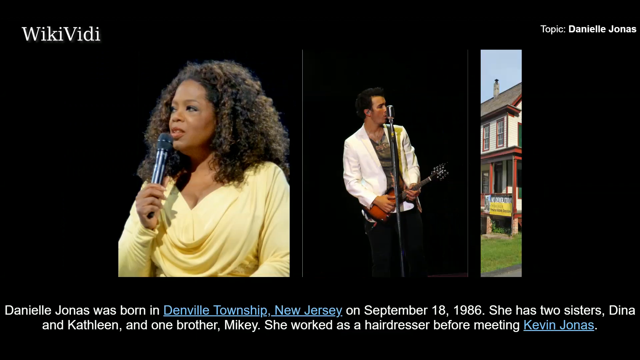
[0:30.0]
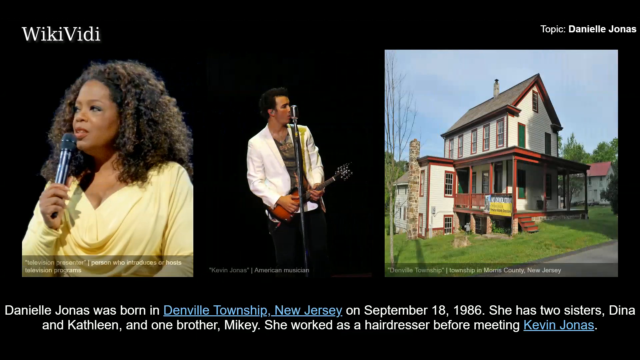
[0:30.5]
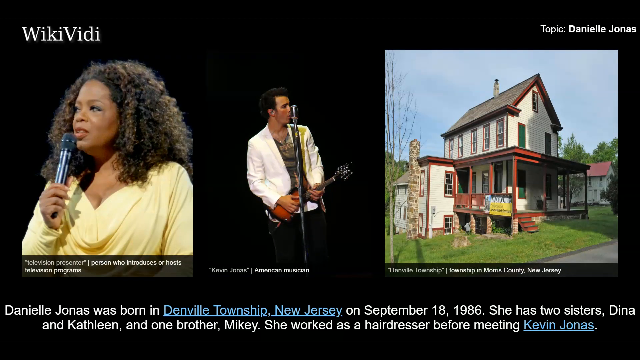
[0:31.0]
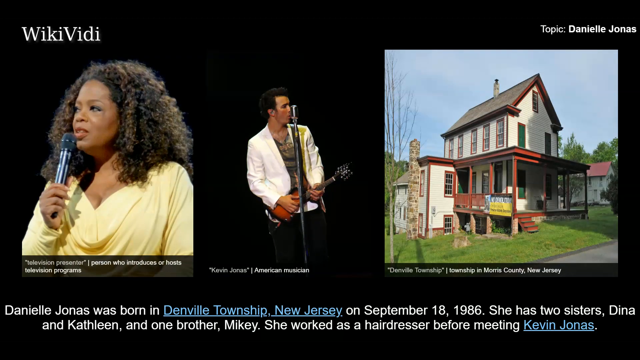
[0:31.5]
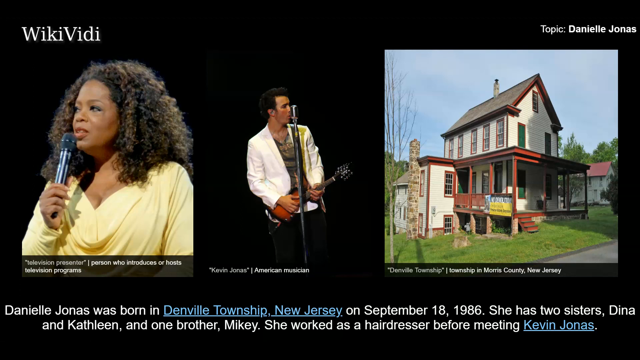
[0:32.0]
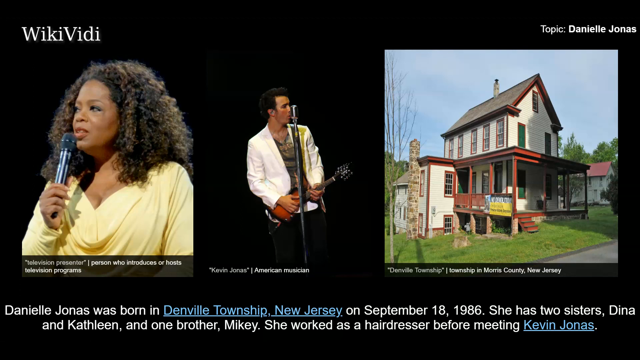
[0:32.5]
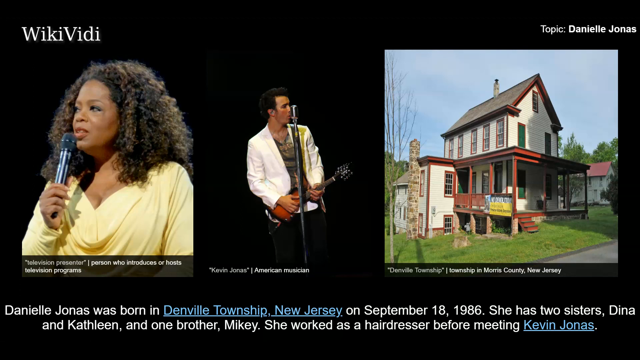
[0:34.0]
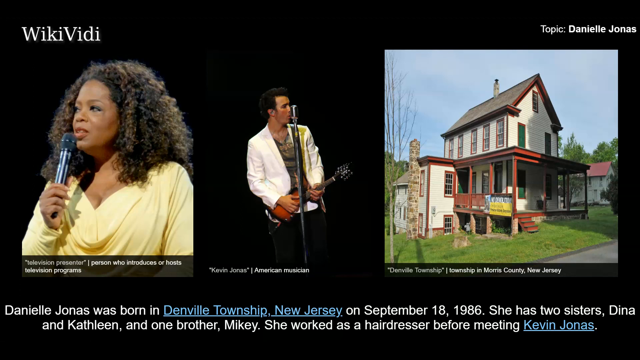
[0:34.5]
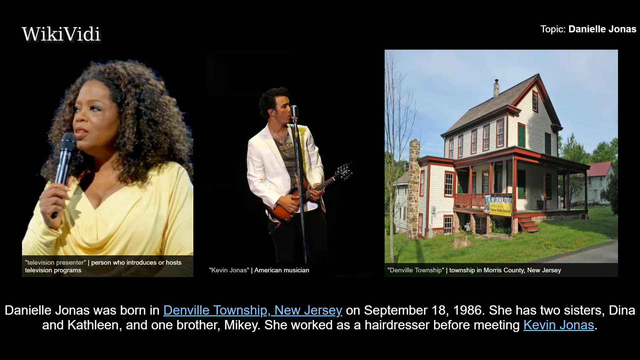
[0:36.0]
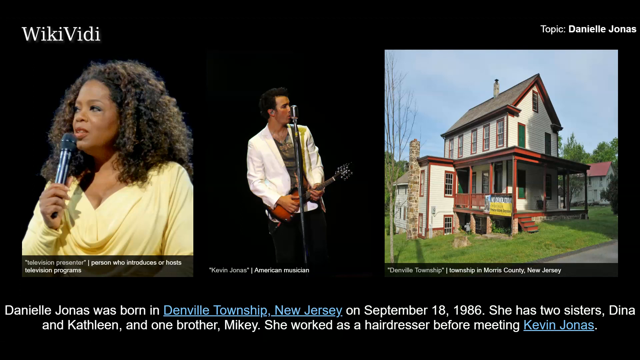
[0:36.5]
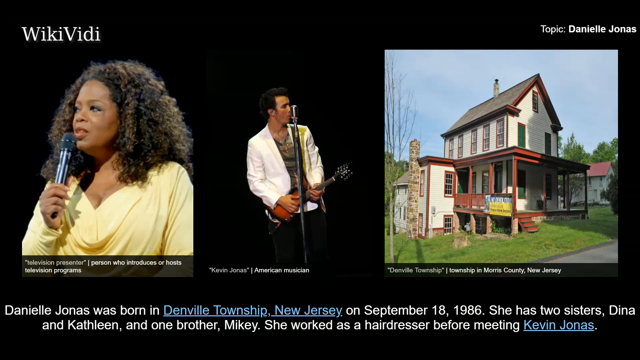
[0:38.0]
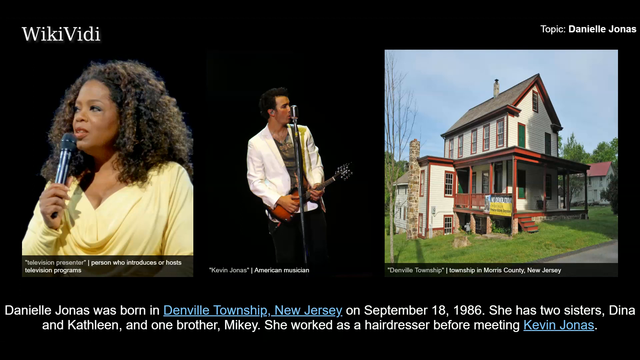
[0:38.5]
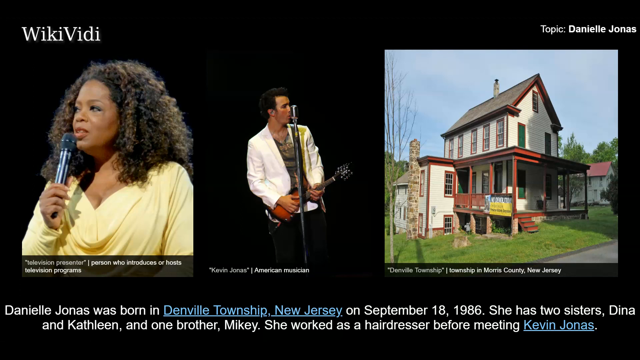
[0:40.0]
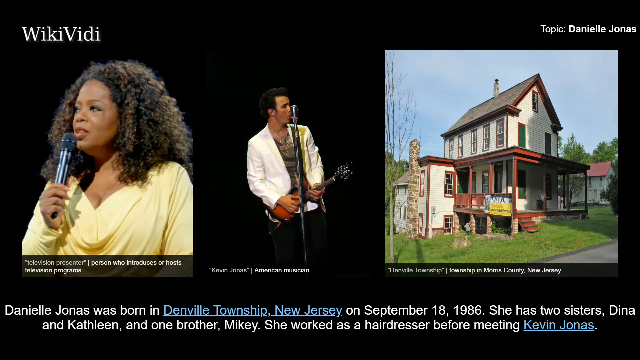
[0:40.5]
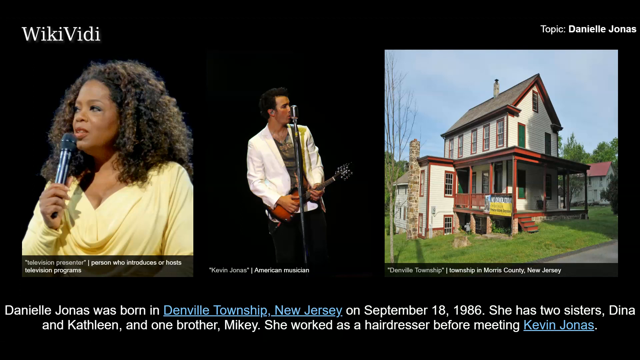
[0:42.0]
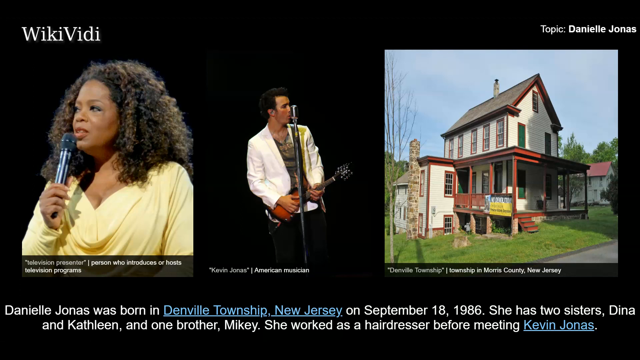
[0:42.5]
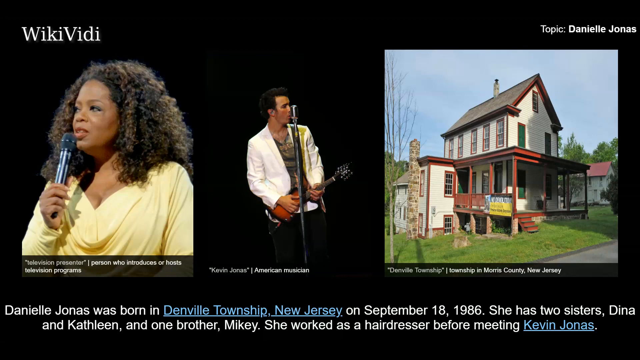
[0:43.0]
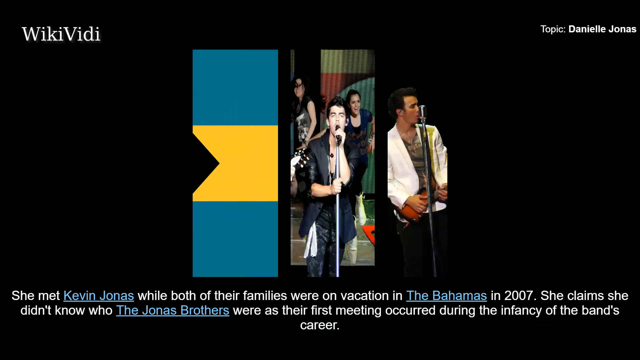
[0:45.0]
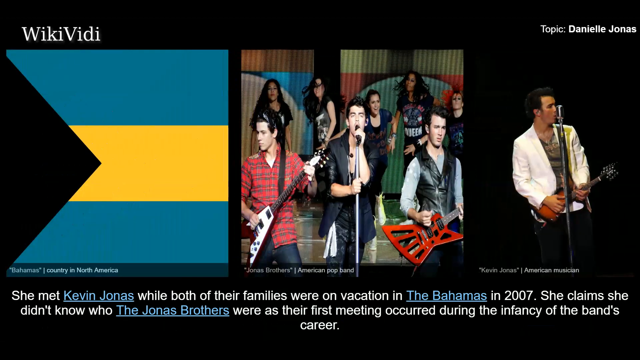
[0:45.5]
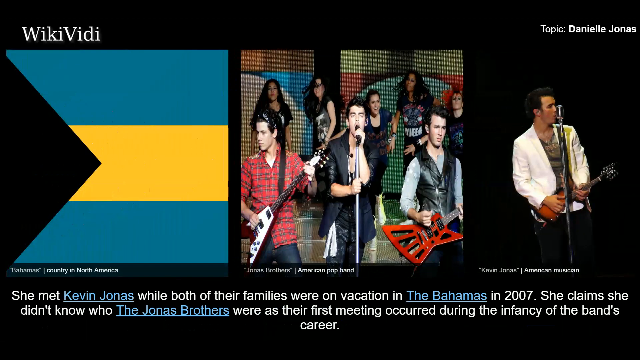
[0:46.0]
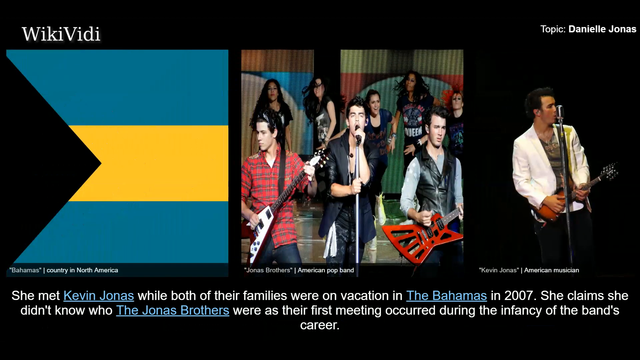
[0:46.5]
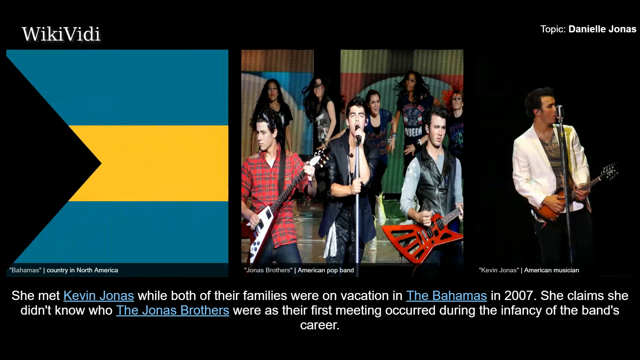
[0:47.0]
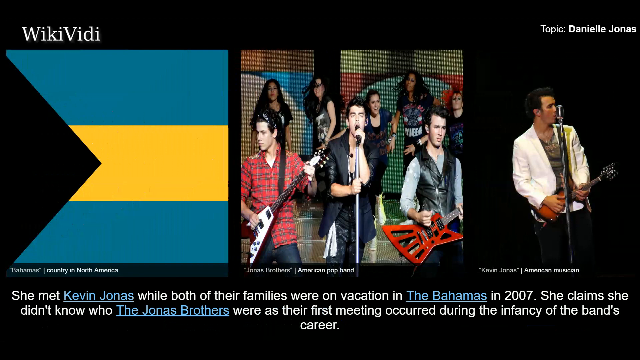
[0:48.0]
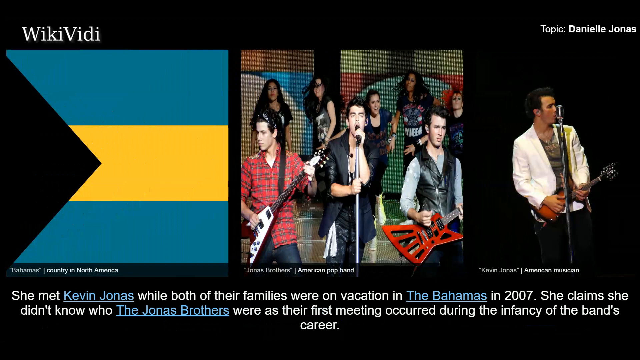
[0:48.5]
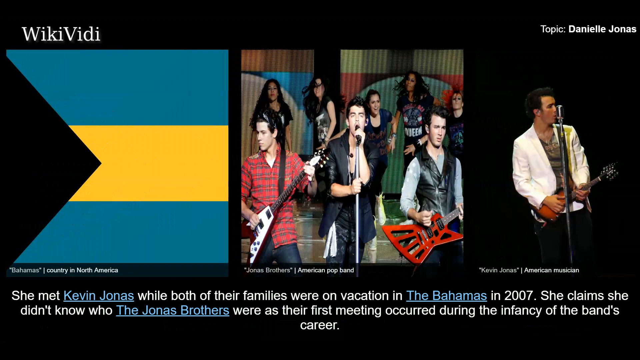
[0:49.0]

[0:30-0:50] The far-left image on the black background shows Oprah in a yellow shirt, with long brown curly hair and dark brown skin, speaking into a microphone. The middle image shows Kevin Jonas in a white suit jacket, playing a guitar-like instrument and singing into a microphone. An image of a house in Danville Township, New Jersey, then appears on the far right. The paragraph at the bottom says that Danielle was born there in New Jersey in 1986, that she has two sisters and one brother, and that she worked as a hairdresser before meeting Kevin Jonas. This slide stays the same until near the end. The far-right image shows Kevin Jonas performing by himself. The bottom paragraph is then replaced by one saying that Danielle Jonas met Kevin while on vacation in the Bahamas in 2007, and that when they met, the Jonas Brothers were in the infancy of their career.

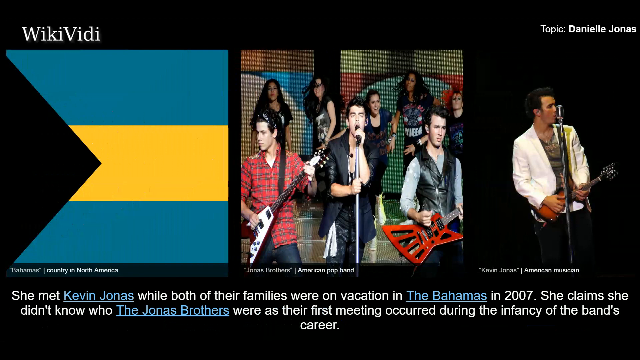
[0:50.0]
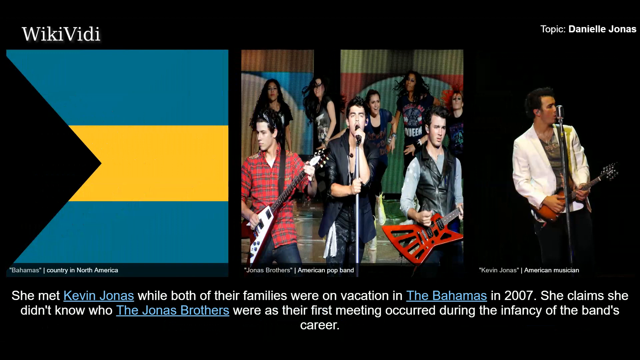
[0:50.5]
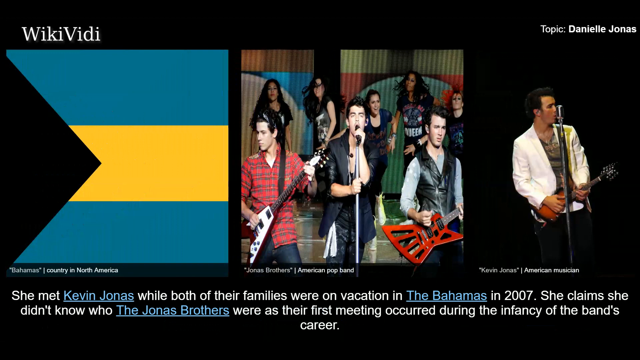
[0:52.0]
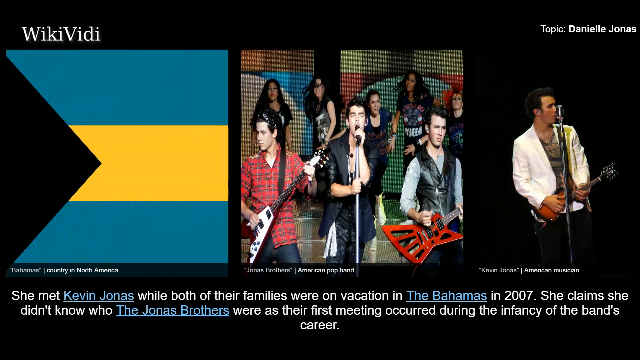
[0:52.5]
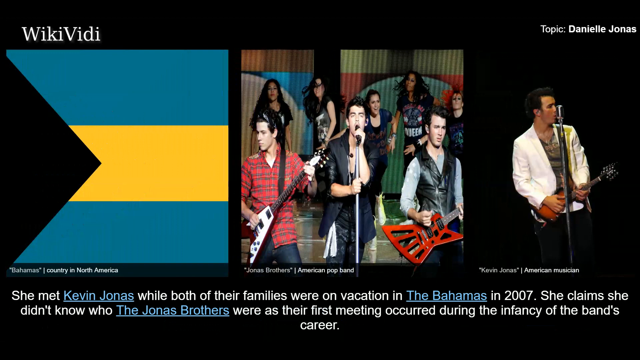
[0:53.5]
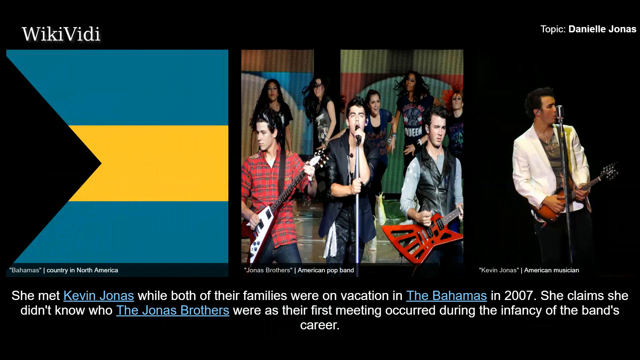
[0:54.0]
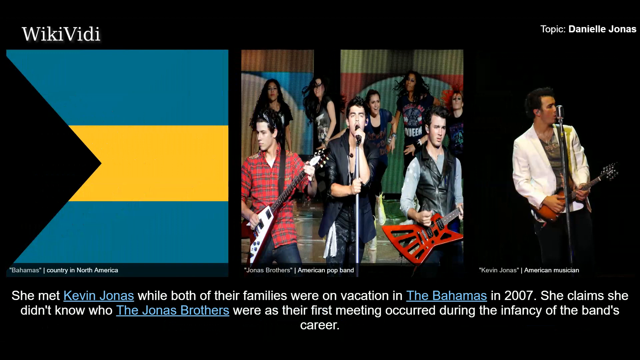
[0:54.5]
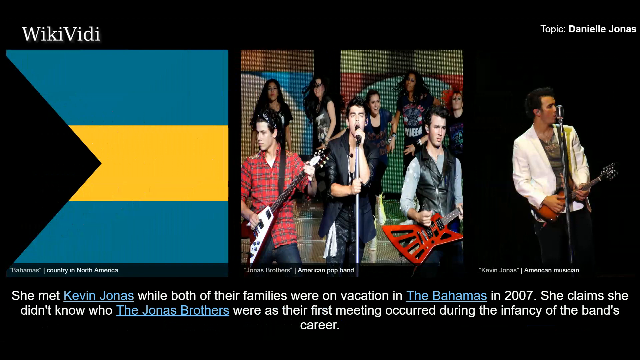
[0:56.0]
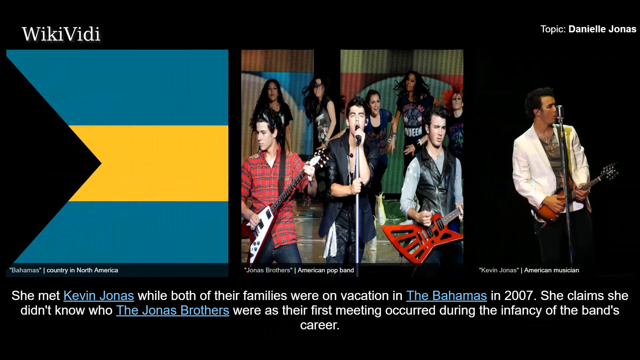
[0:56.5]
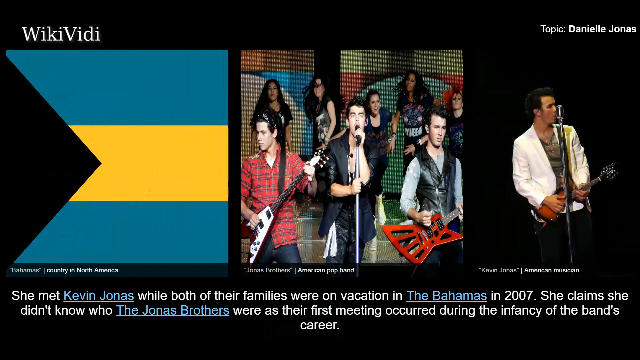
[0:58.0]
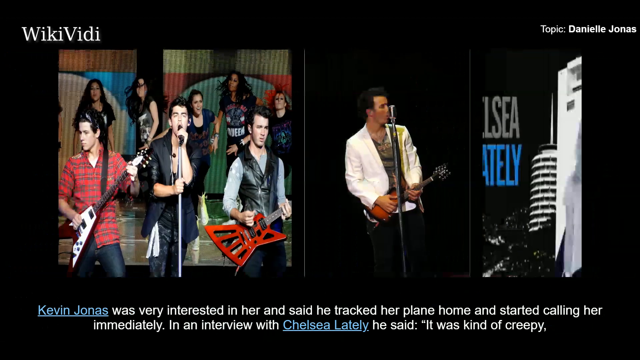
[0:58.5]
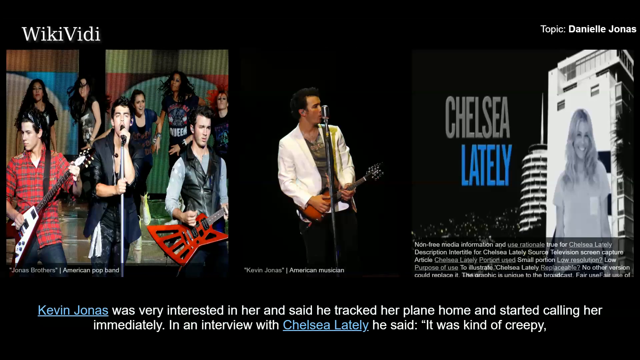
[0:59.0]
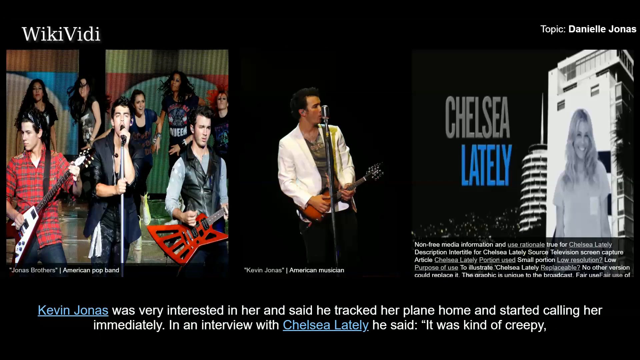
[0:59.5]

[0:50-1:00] The flag of the Bahamas is on the far left, with large blue sections at the top and bottom, a yellow rectangle in the middle, and a large black triangle on the left side. The middle image shows the Jonas Brothers performing on stage, with women behind them who appear to be dancing. The far-right image shows Kevin Jonas playing guitar on a stage in front of a black background. The paragraph below the images is mainly white text with some blue hyperlinks. Shortly after, in a transition, the far-left image of the Bahamas flag goes away and an image for Chelsea Lately appears on the far right.